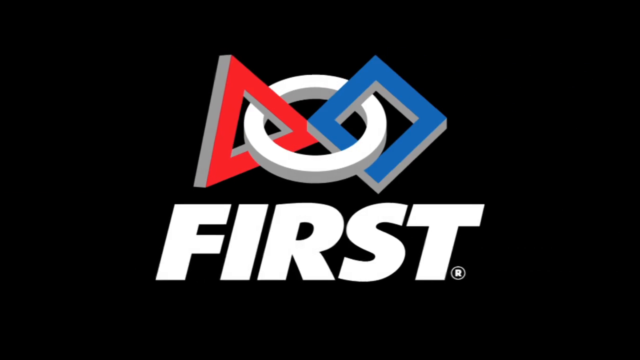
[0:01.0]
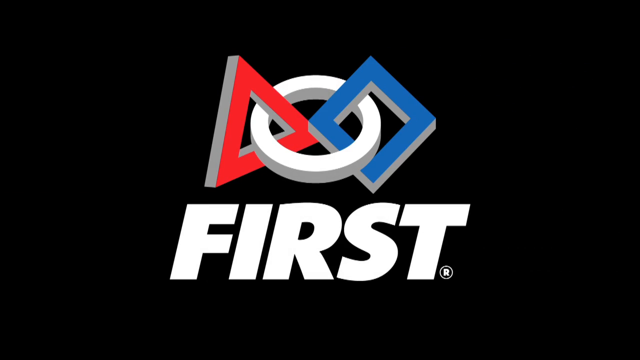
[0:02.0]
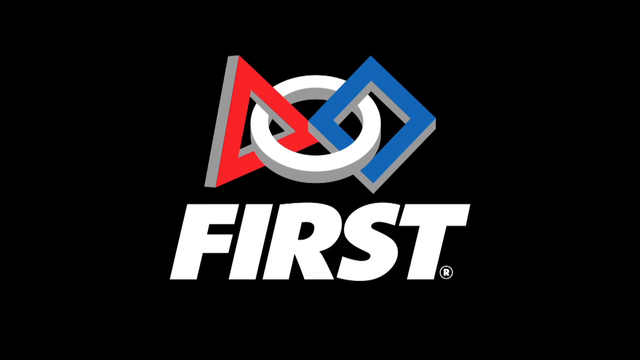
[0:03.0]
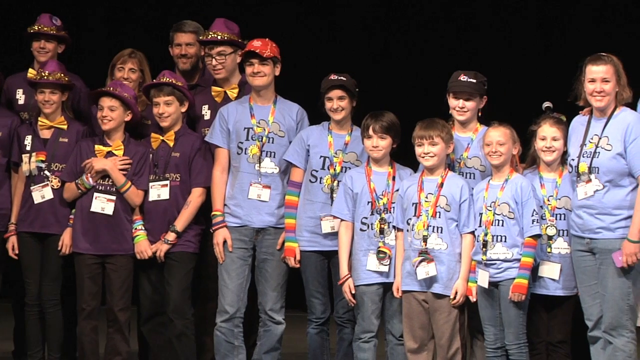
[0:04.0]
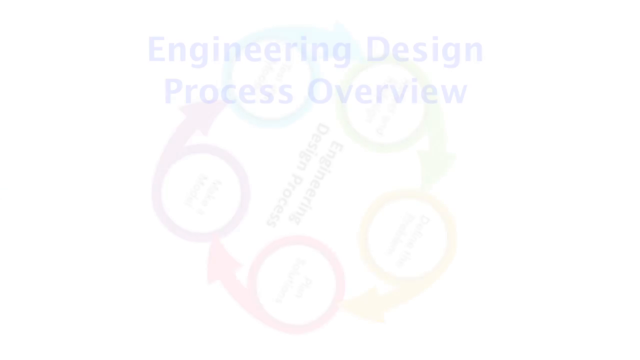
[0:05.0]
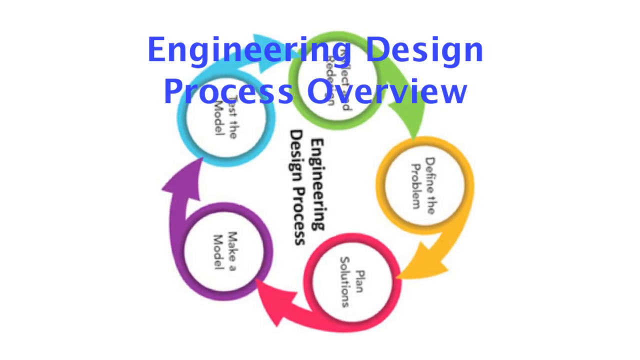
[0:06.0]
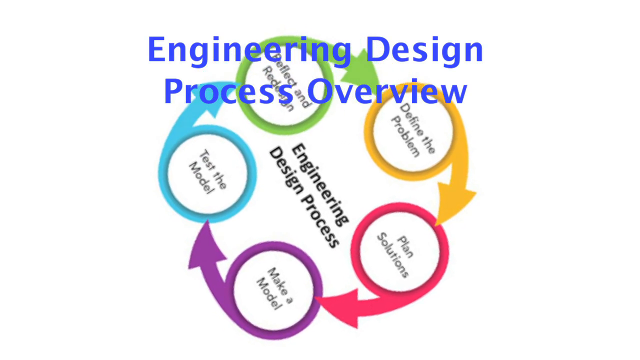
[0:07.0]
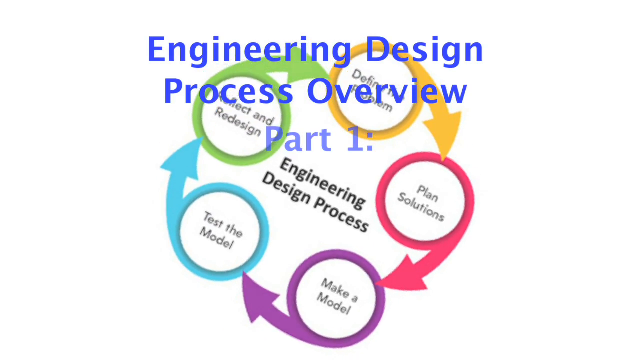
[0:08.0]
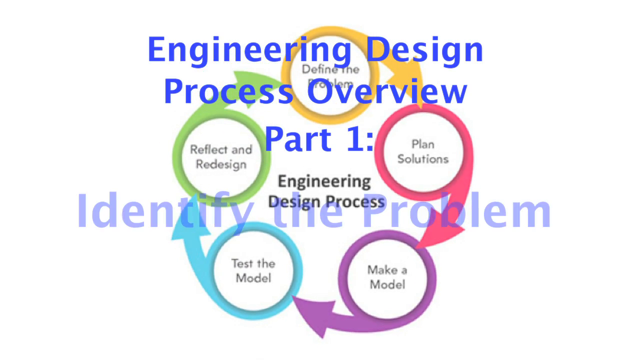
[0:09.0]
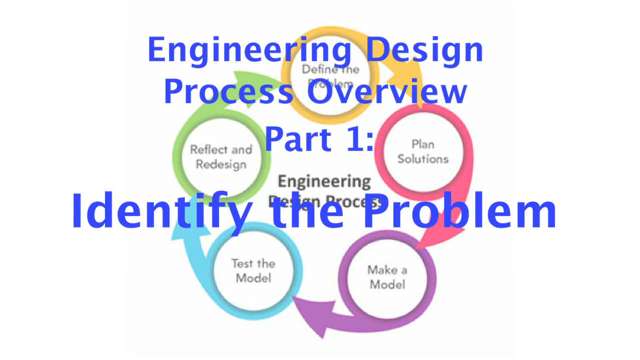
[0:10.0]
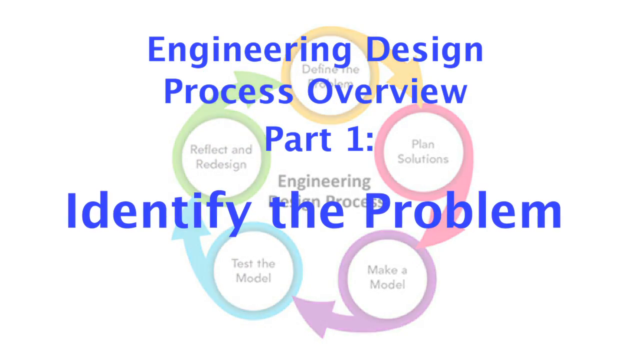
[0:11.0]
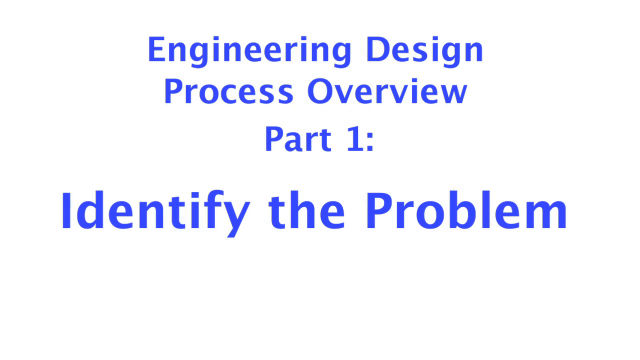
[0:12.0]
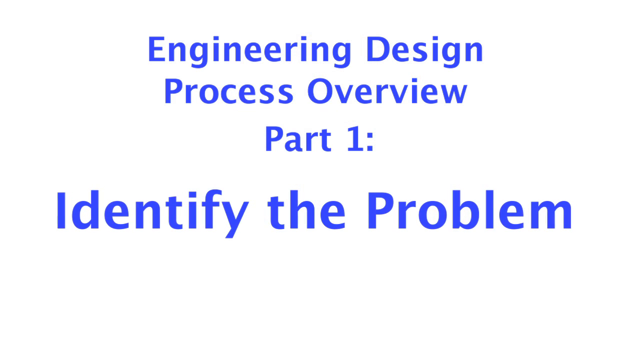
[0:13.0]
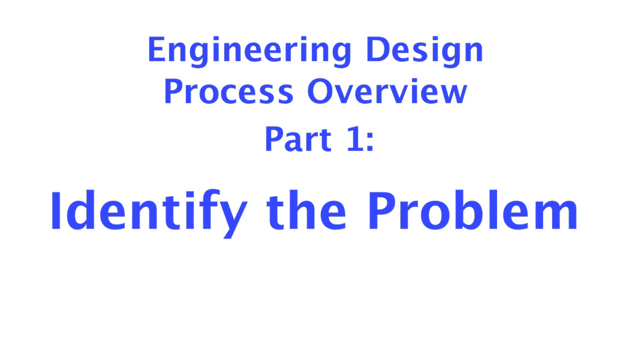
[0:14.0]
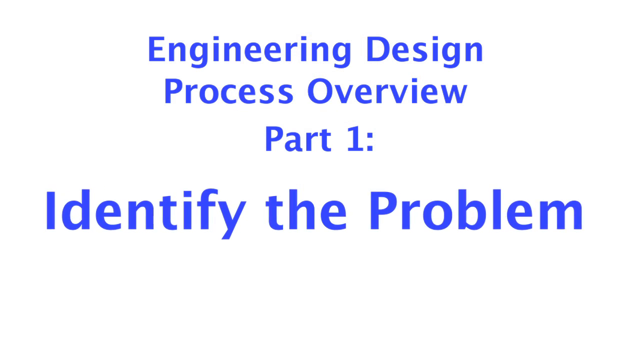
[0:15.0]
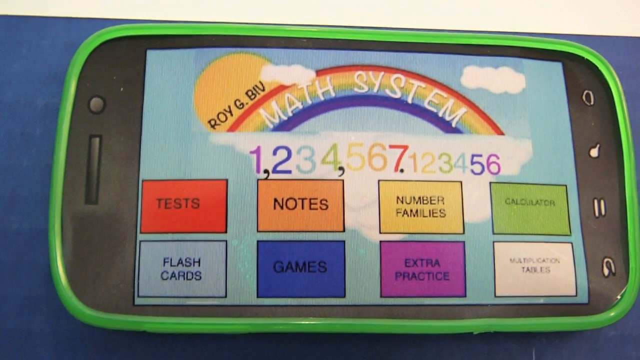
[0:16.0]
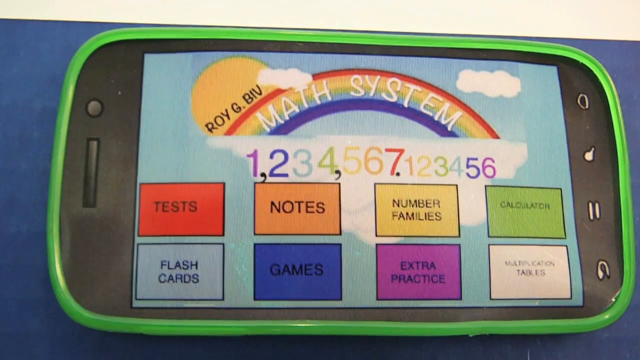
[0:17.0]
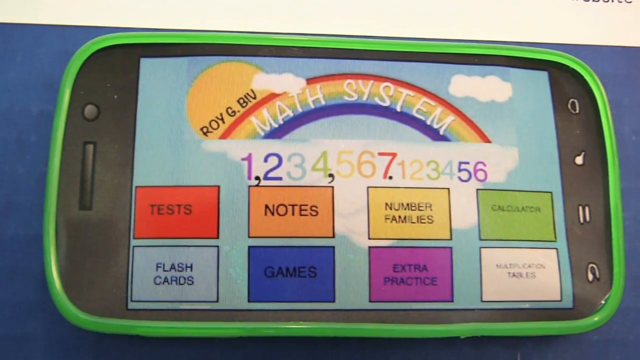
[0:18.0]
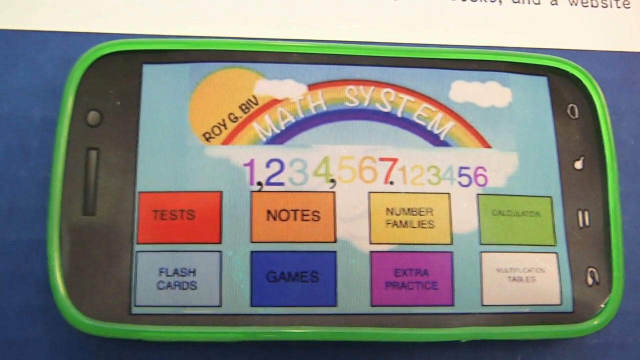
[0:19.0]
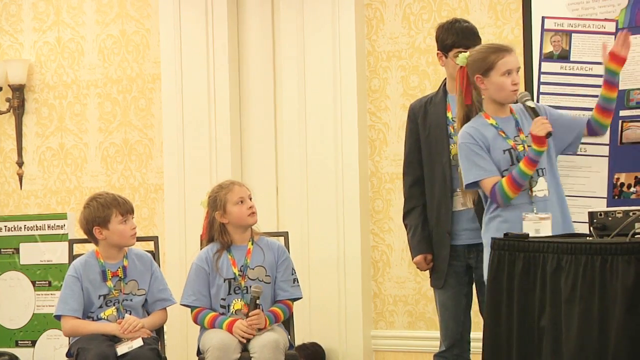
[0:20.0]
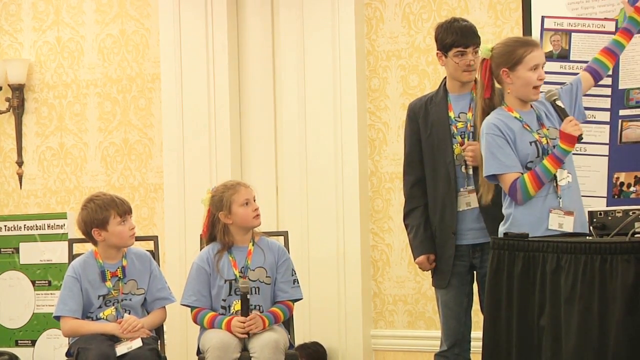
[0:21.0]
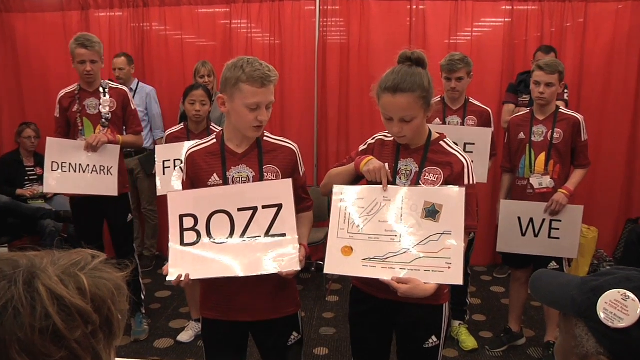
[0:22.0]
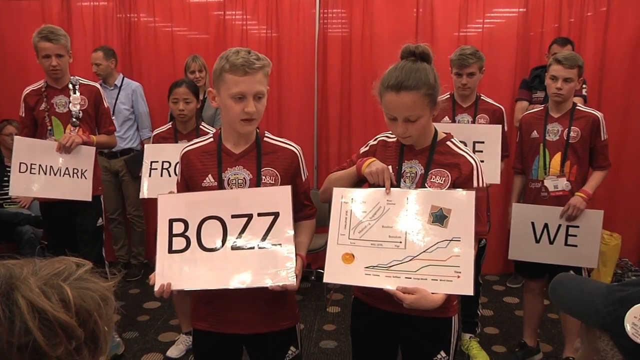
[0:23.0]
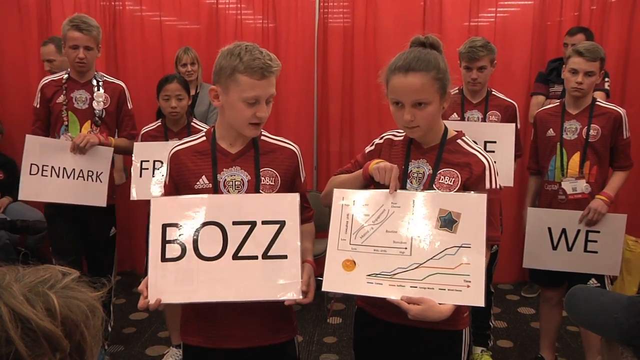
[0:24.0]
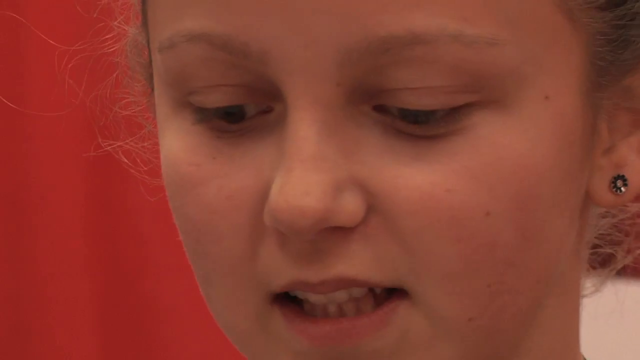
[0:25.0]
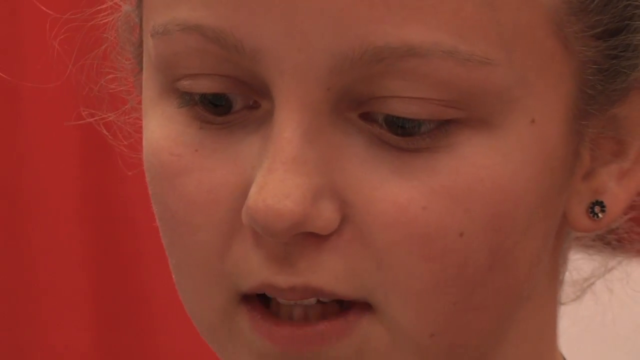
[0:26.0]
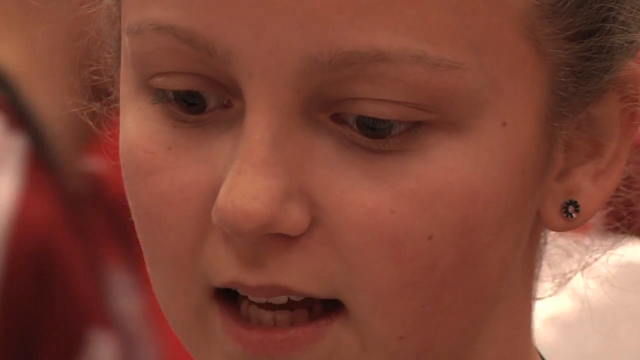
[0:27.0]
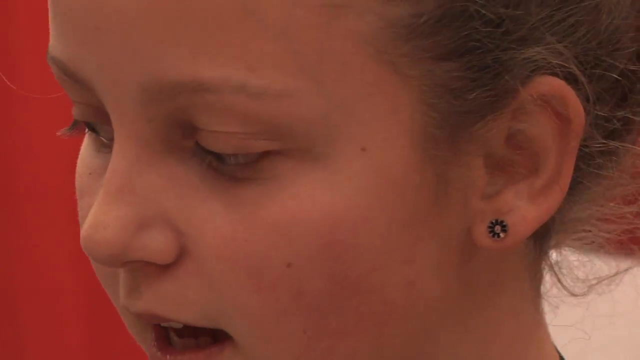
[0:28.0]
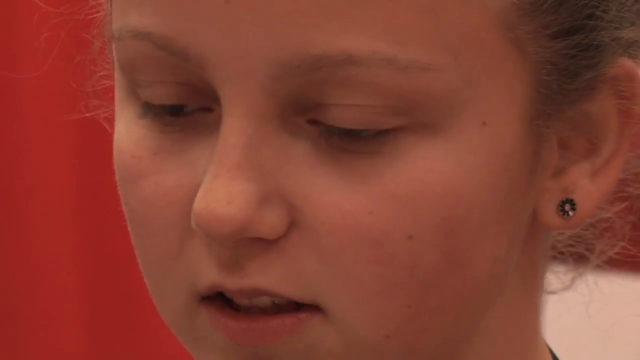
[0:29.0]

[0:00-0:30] The video begins on a solid black screen that instantly morphs into a label reading "first." Above the word is a picture of a circle running through the hole in a triangle and a square, connecting them: the triangle on the left, the circle in the middle and the square on the right. The triangle is red, the circle is white, the square is blue with gray edges, and the word "first" is also white. The scene stays on this for a second, then pans across a group of young and medium-aged children dressed in the same outfit who appear to be posing happily for a picture. Next, the text "engineering design process and overview" appears with bubbles and arrows pointing in a circular manner, and the words "test the model to find the problem plan the solution and make a model" appear. The arrows point clockwise, and then the image rotates counterclockwise. "Engineering design process and overview" comes up as part one, the screen says "math systems" and shows a large note, and then the video switches to a scene of children competing in an academic competition.